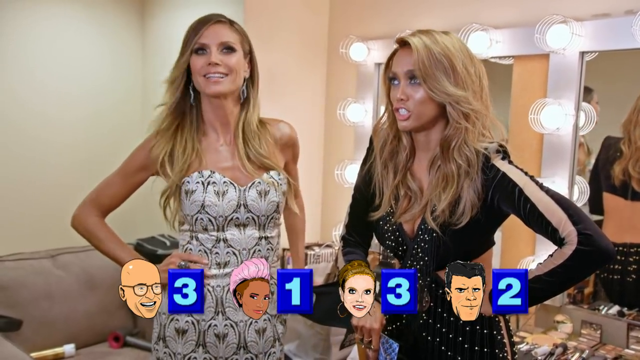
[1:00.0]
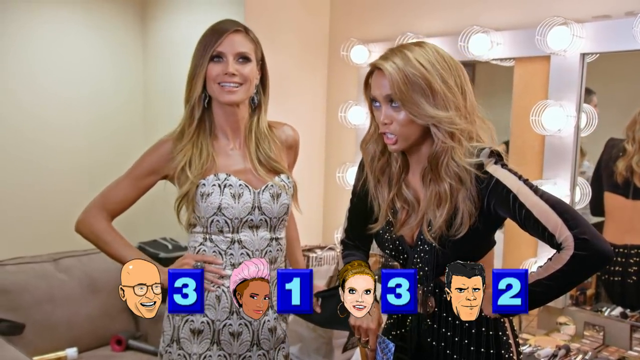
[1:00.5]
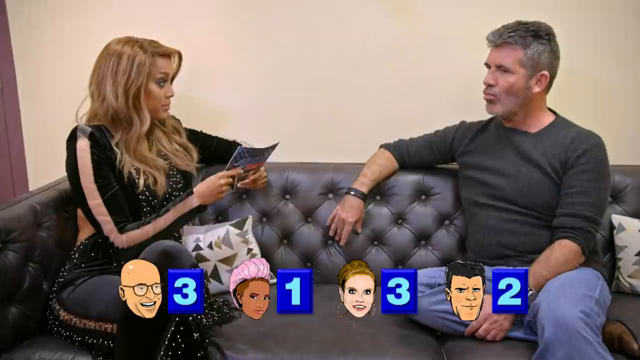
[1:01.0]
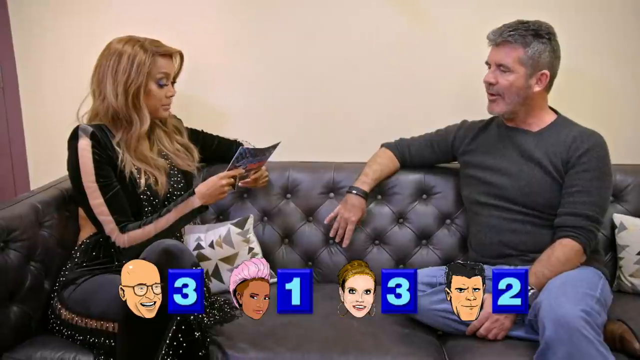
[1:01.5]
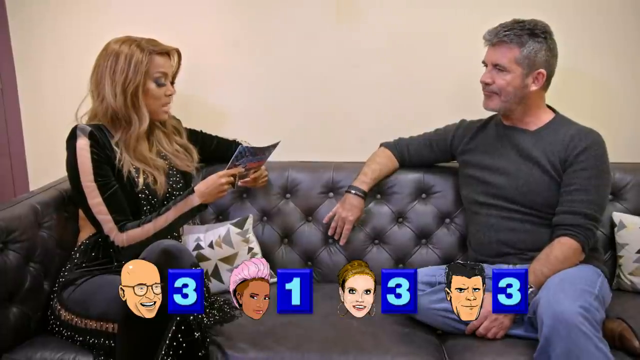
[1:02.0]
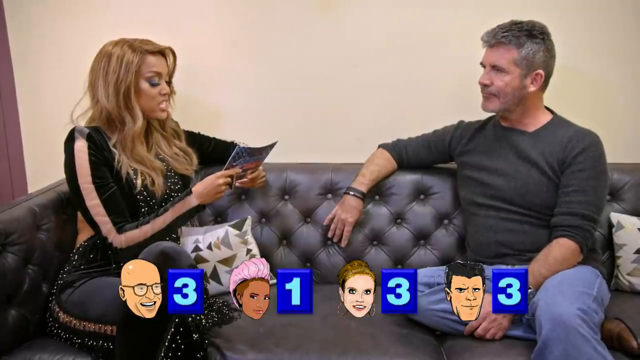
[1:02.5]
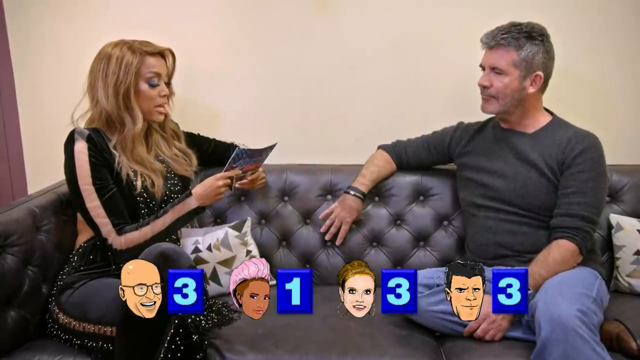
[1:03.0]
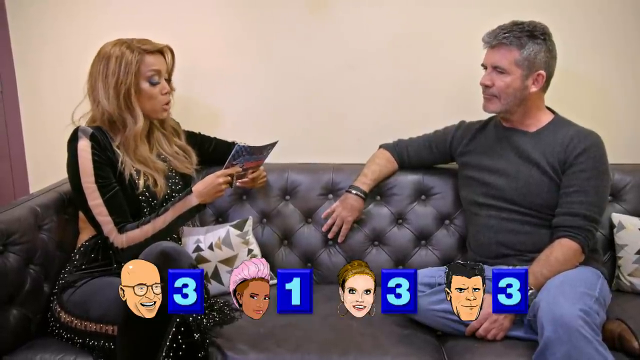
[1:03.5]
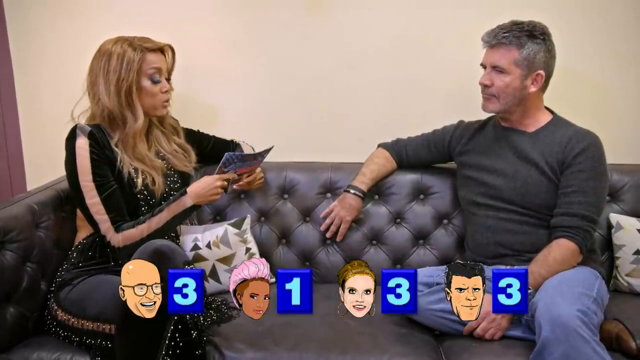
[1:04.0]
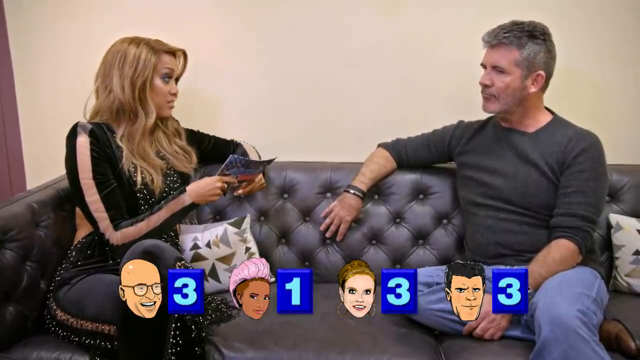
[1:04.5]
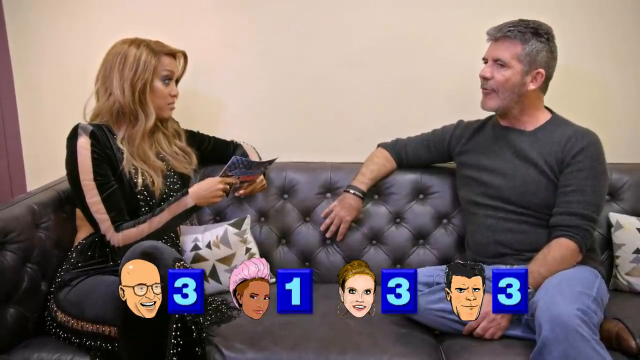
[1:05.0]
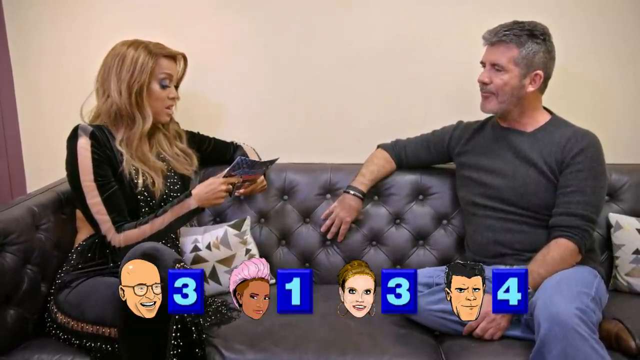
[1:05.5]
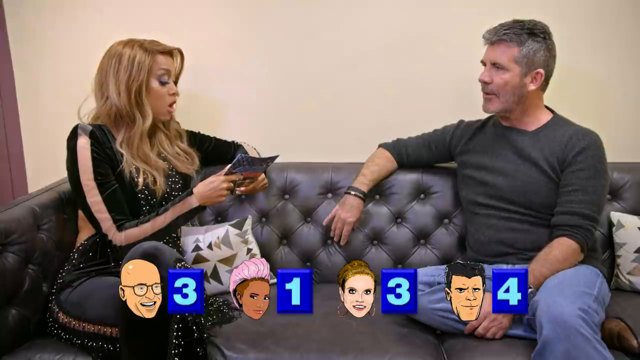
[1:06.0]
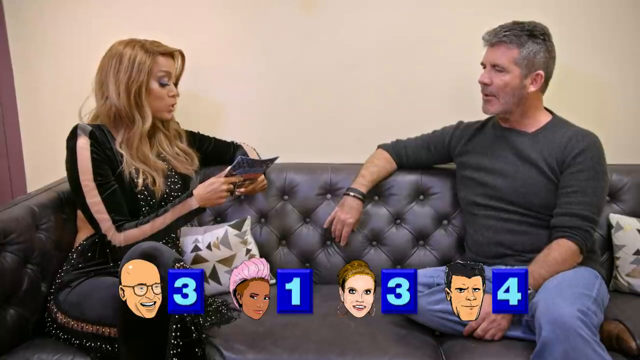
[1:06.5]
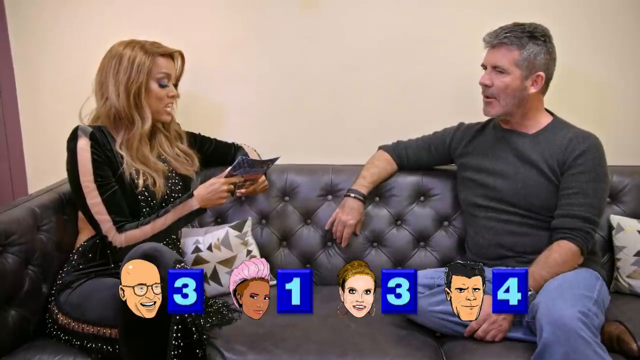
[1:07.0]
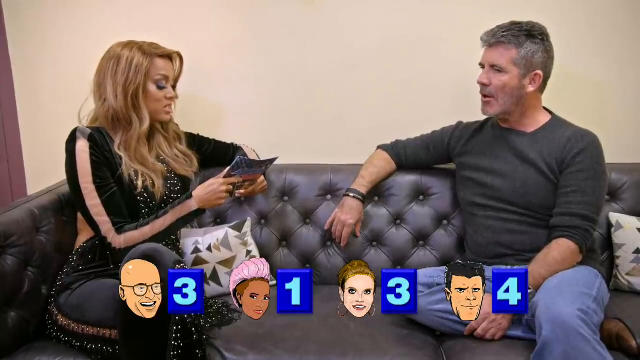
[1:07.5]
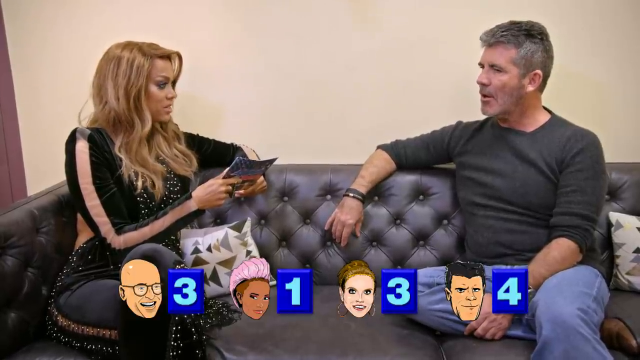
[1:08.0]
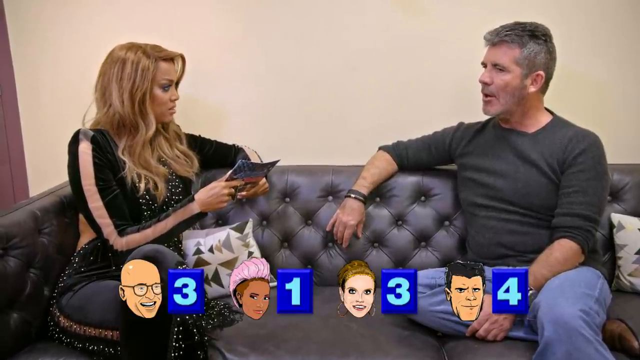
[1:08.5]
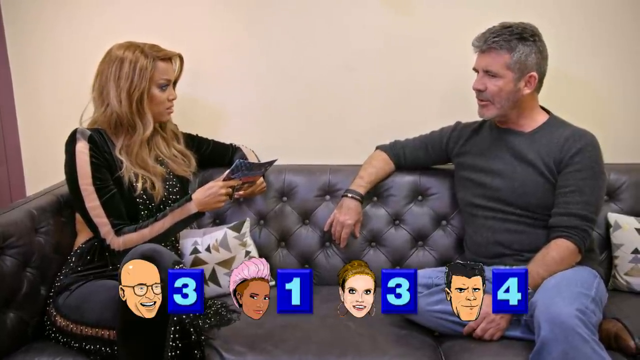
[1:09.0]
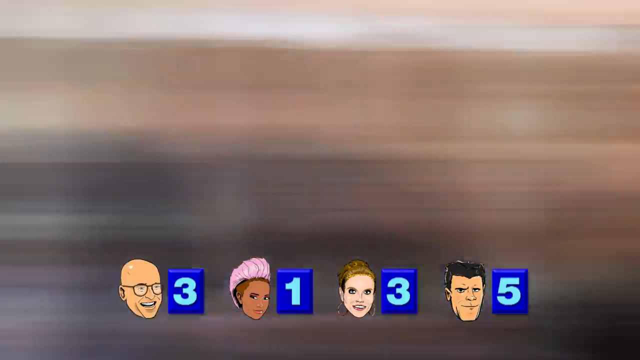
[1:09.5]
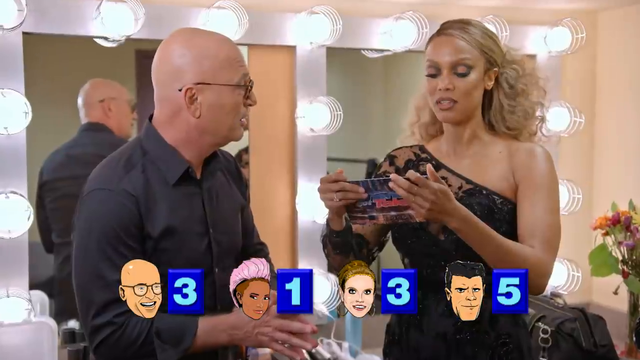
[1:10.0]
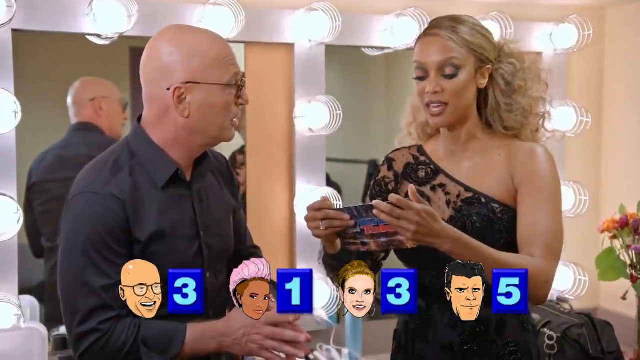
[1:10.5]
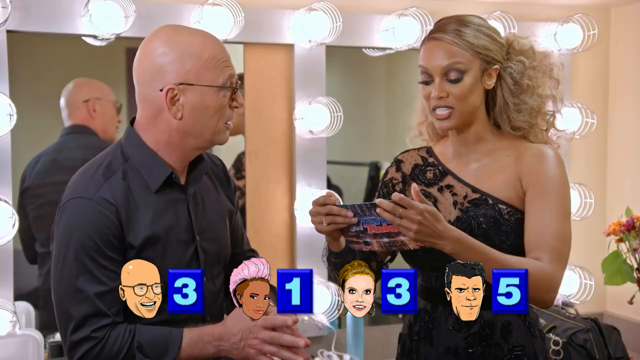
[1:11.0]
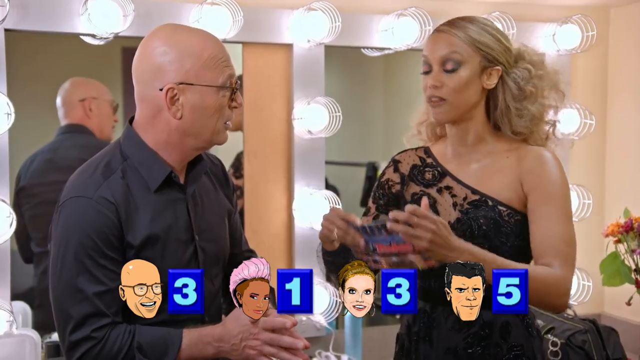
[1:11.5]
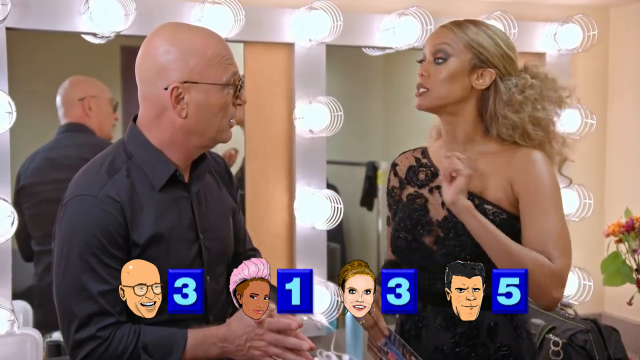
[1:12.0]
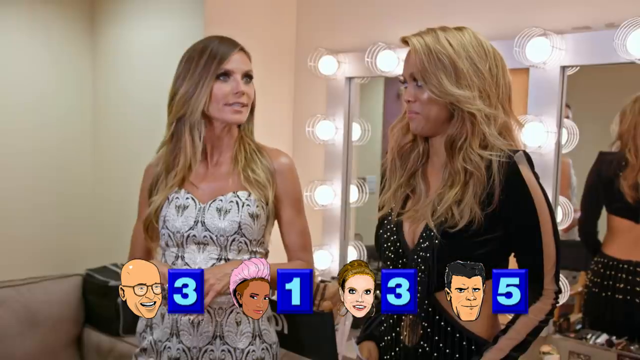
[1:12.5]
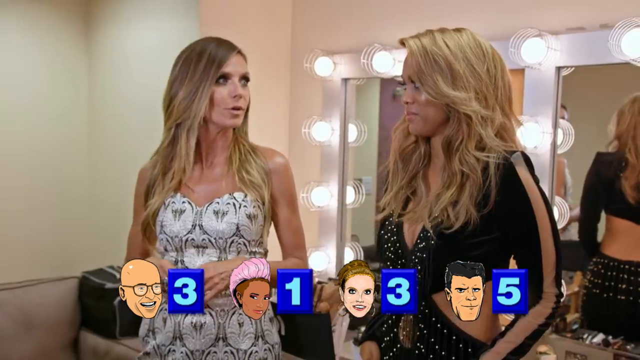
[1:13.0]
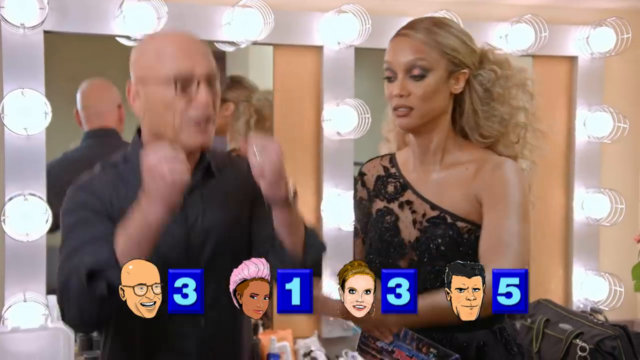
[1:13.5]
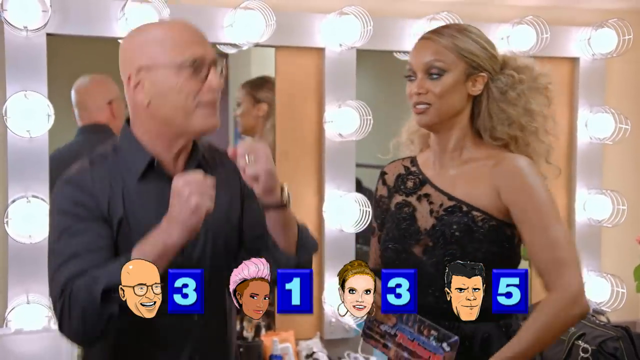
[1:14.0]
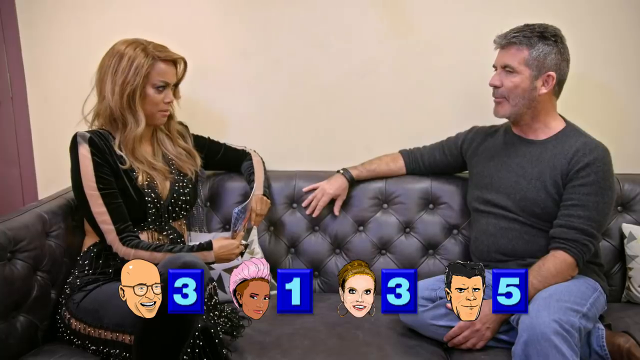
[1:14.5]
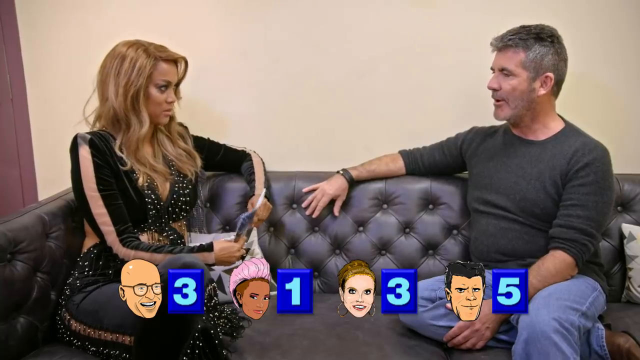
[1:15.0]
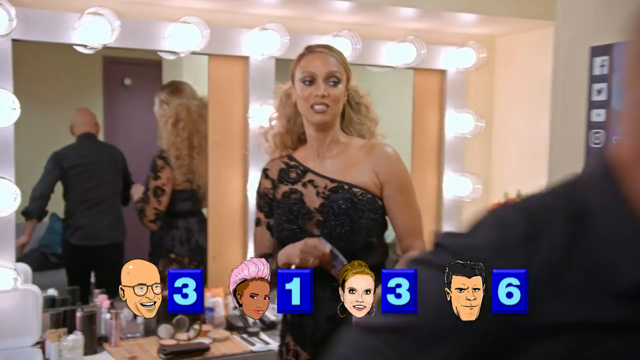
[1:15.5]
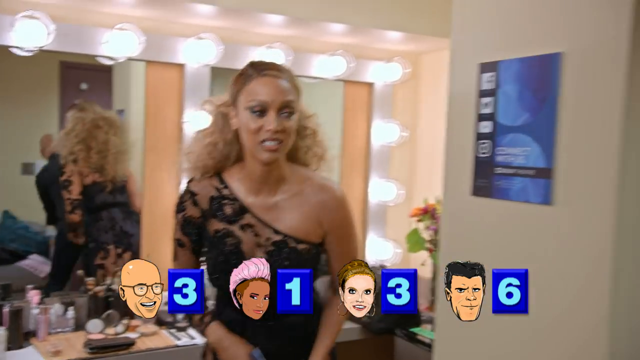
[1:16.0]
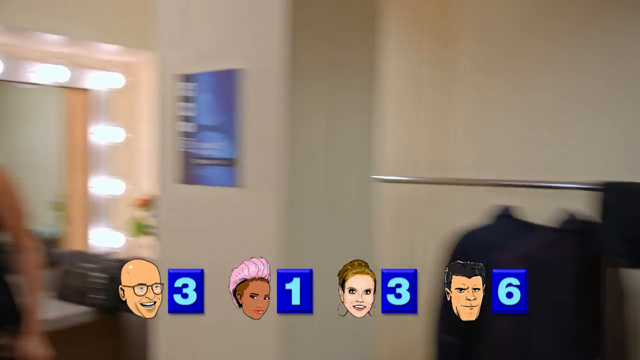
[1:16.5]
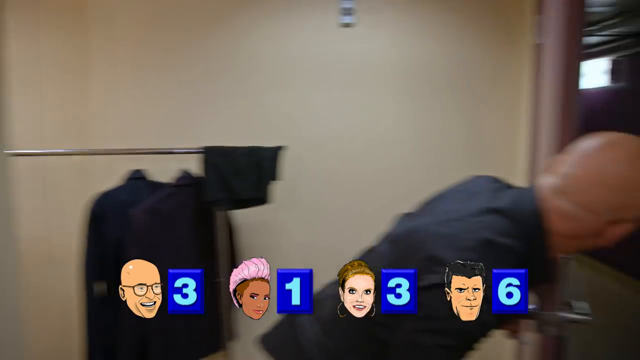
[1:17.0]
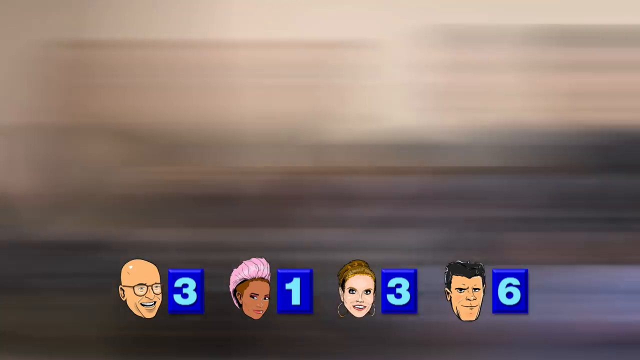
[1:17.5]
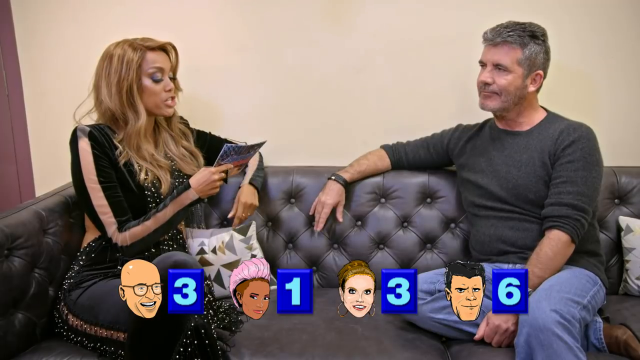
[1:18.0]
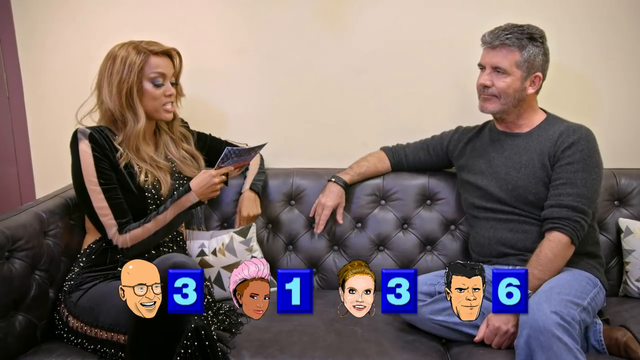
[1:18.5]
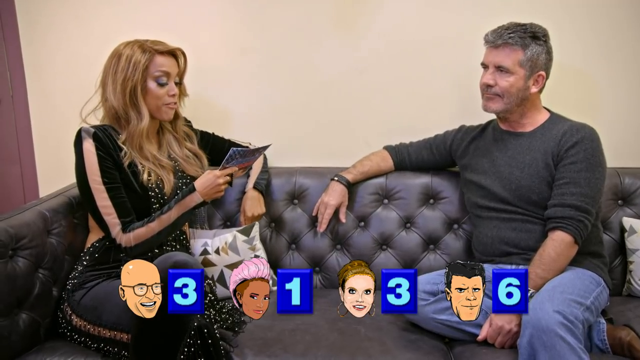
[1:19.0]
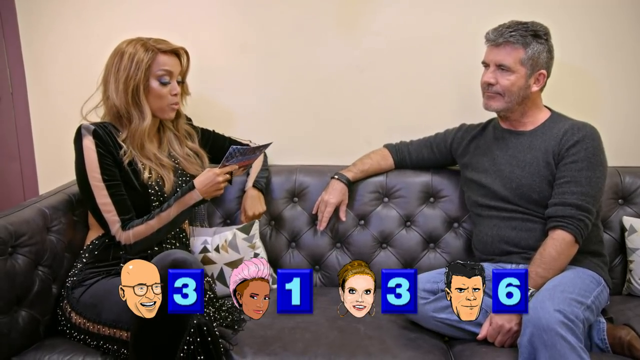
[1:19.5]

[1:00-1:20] Tyra reads from a place card, asking Simon Cowell questions. He answers with a serious look, nodding his head a little, one leg folded on the couch and his arm on the back of the couch. The video goes to Howie Mandel in the dressing room as Tyra aggressively reads the cards and asks questions; at one point Howie jumps up and down, runs to the other side of his dressing room and kind of peeks out around the corner. In another segment Tyra asks Heidi Klum questions; Heidi answers, appearing to be in a more jovial mood than the others, with her hand on her hip. At one point Heidi looks up into the air and smiles away from Tyra as Tyra keeps speaking. Tyra uses her hands in a snapping motion while talking to Howie and leans forward while talking to Heidi.